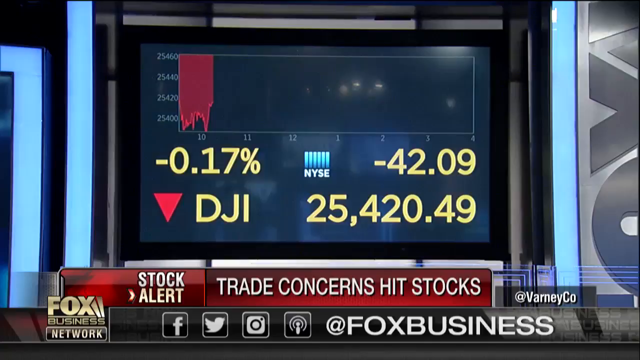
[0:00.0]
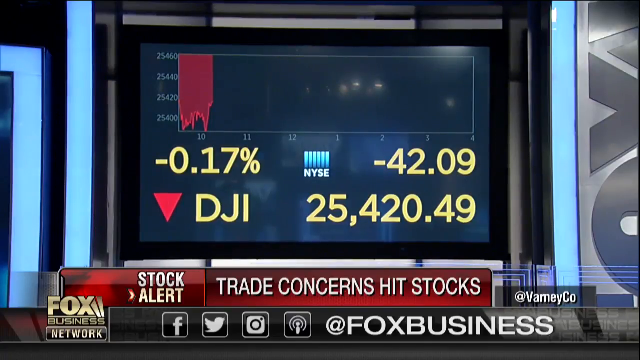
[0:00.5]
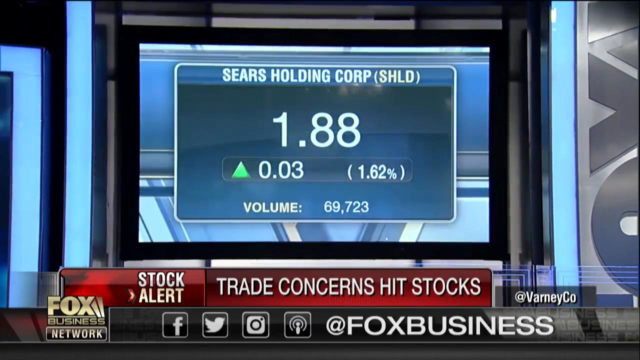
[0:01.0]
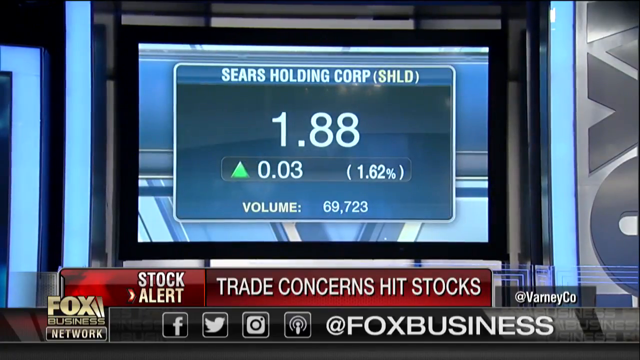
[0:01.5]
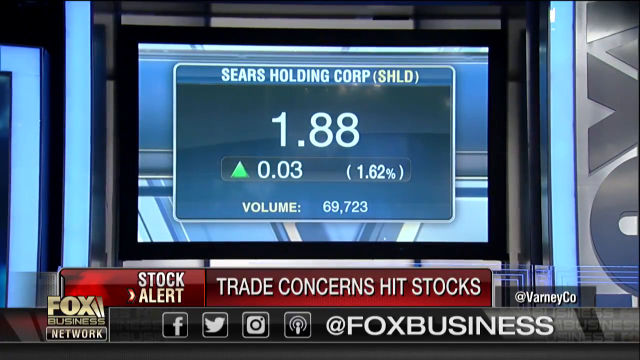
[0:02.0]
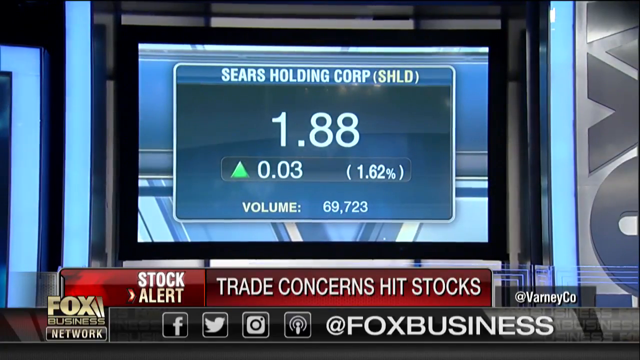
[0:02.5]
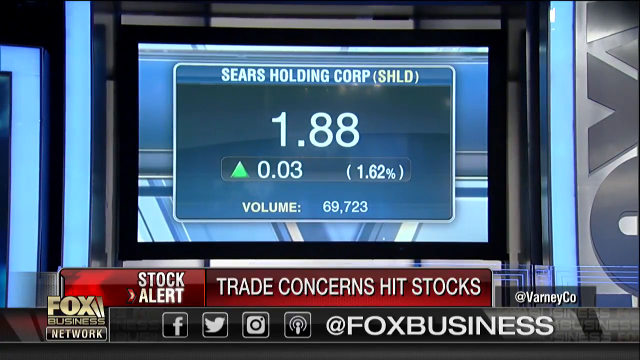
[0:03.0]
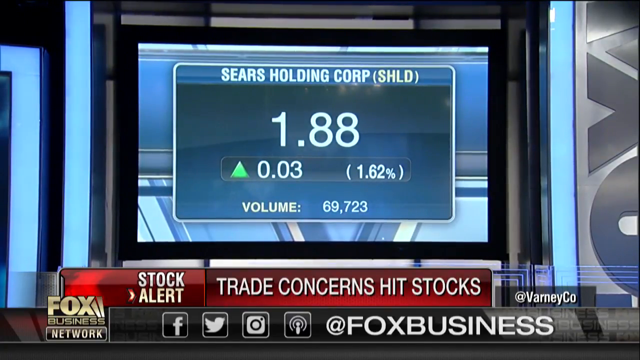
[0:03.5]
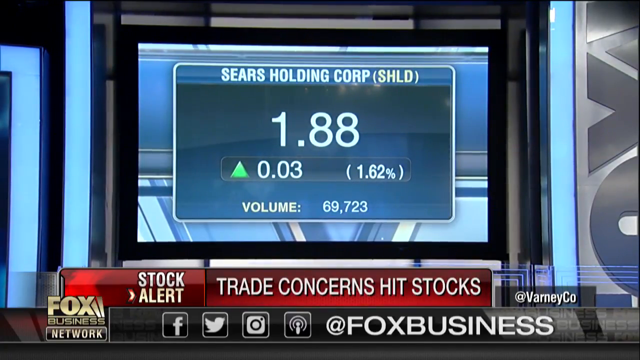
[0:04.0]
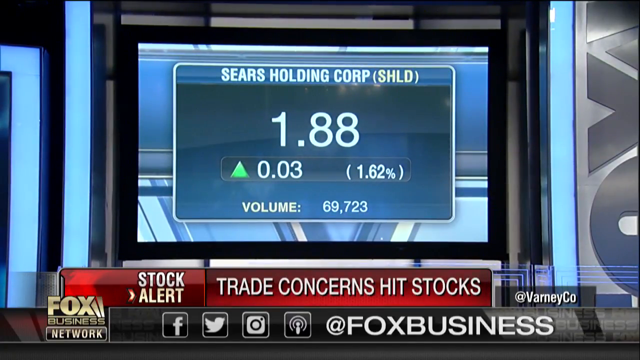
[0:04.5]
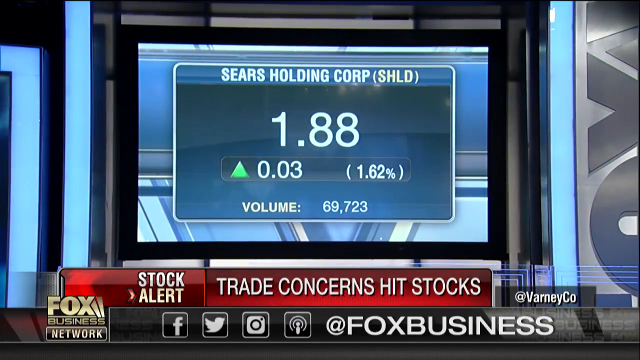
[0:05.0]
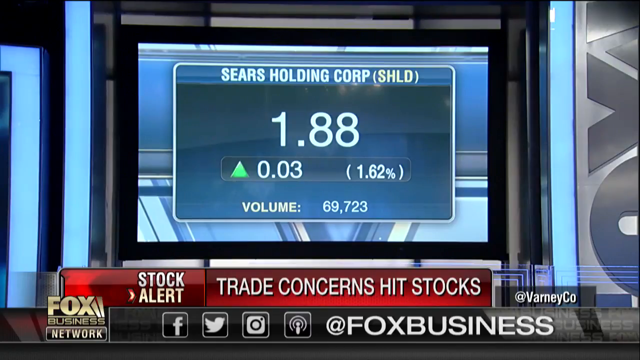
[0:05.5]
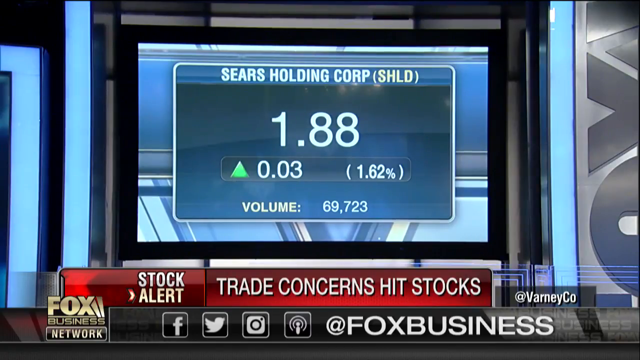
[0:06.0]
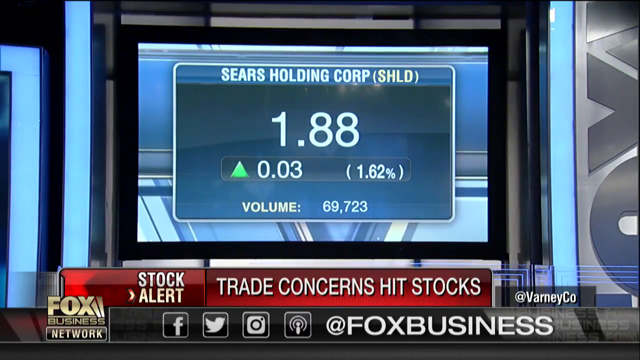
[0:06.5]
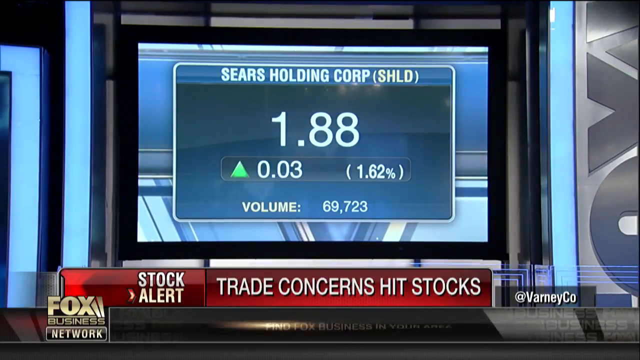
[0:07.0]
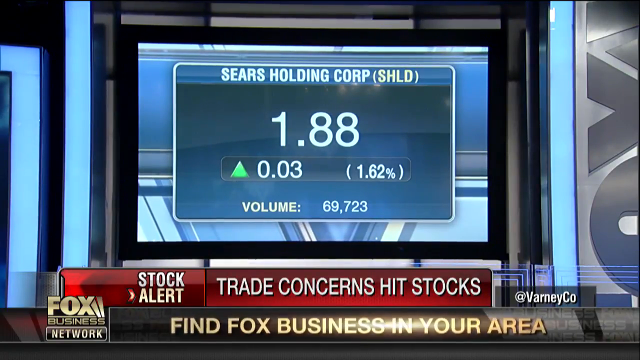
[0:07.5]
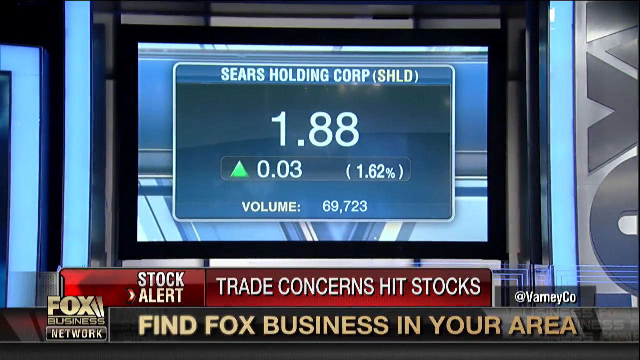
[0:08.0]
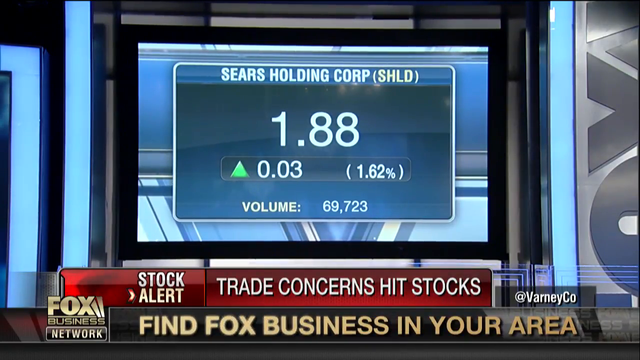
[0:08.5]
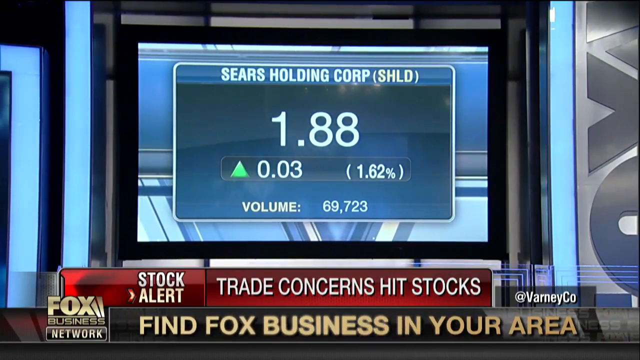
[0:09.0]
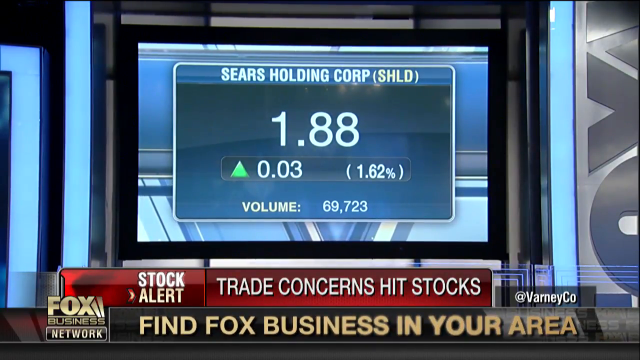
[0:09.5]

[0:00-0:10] A screen shows several numbers. Along the bottom center, text reads "stock alert, trade concerns, hit stocks", and the Fox Business Network logo appears in the lower left-hand corner. The same numbers continue to be shown on the TV screen. The video is rectangular, of good quality, and has smooth transitions. Its colors are gold, red, blue, black and white. Logos of several social media websites appear, including Facebook, Twitter, Instagram and Indeed, along with "at Fox Business".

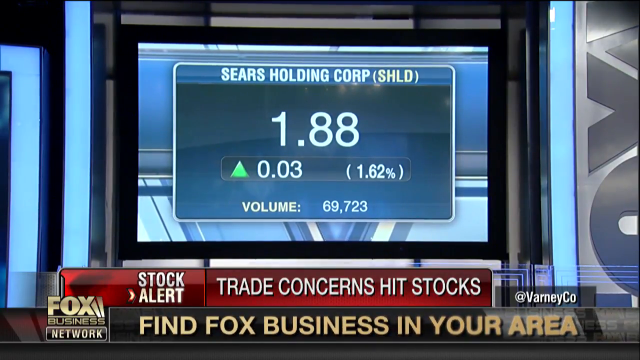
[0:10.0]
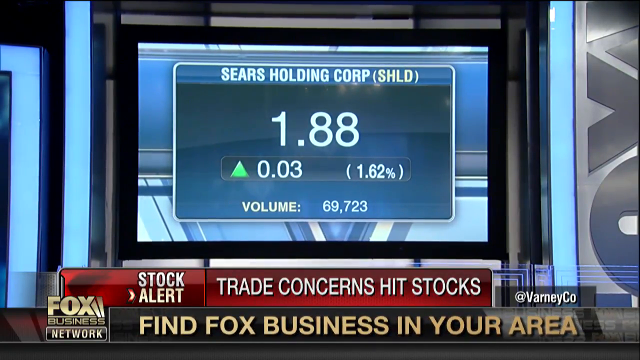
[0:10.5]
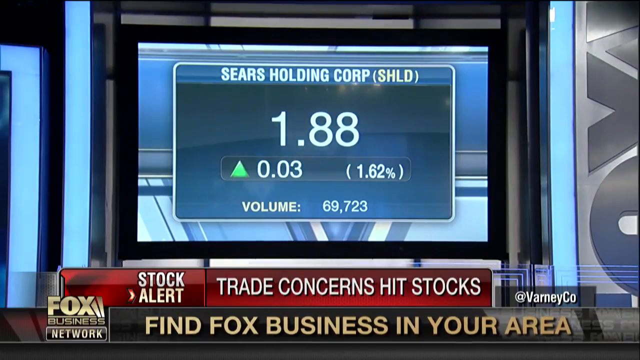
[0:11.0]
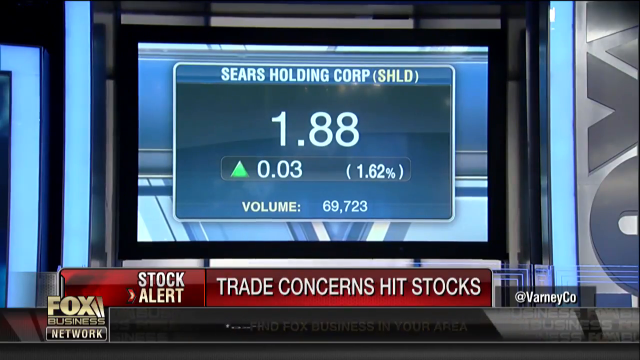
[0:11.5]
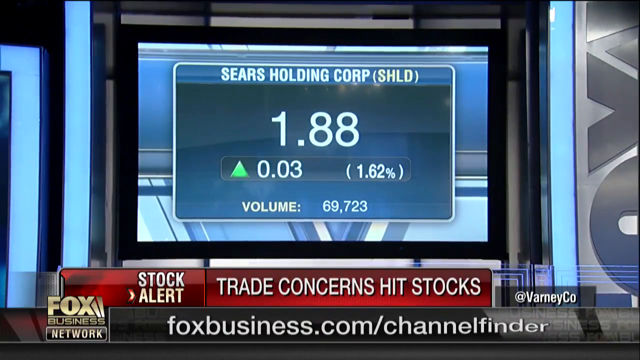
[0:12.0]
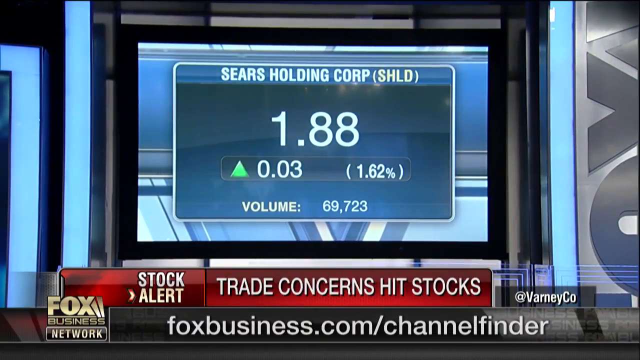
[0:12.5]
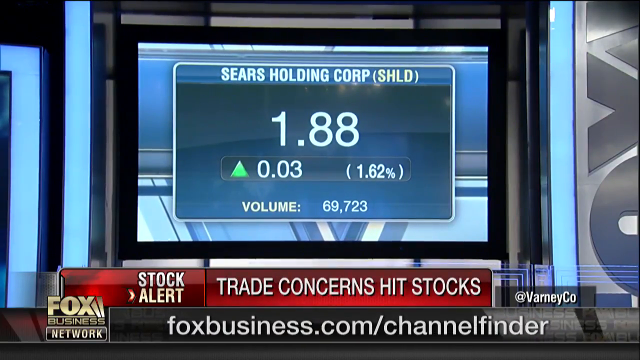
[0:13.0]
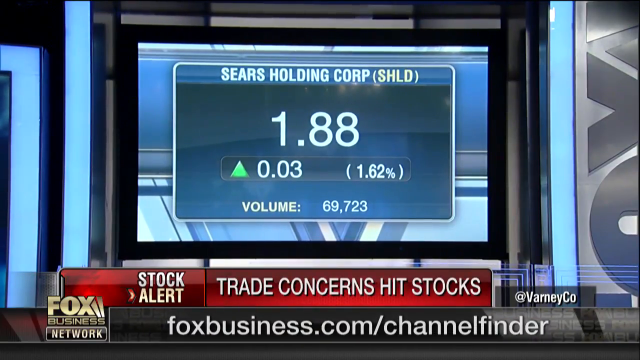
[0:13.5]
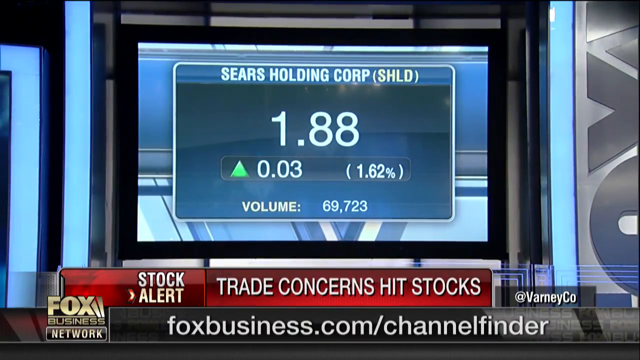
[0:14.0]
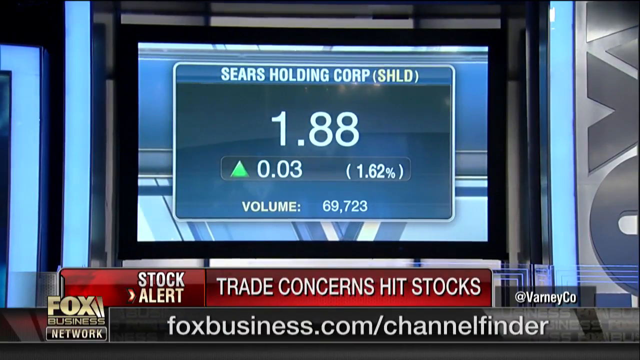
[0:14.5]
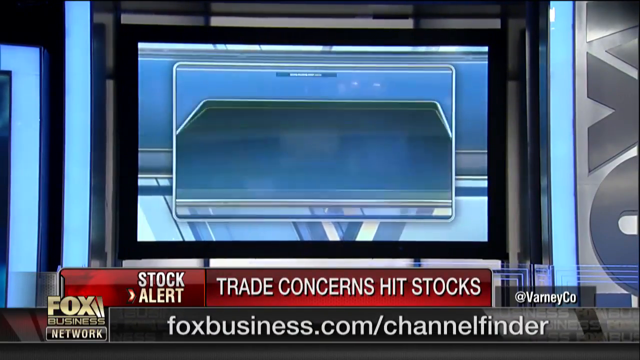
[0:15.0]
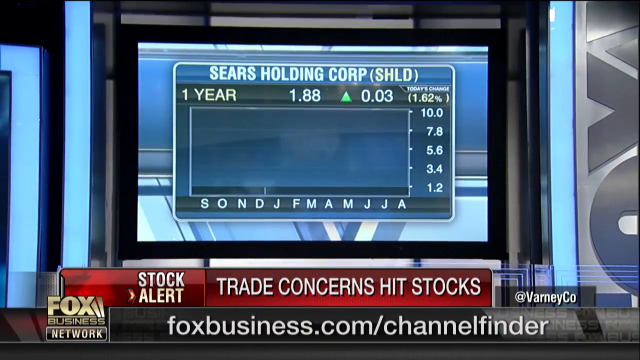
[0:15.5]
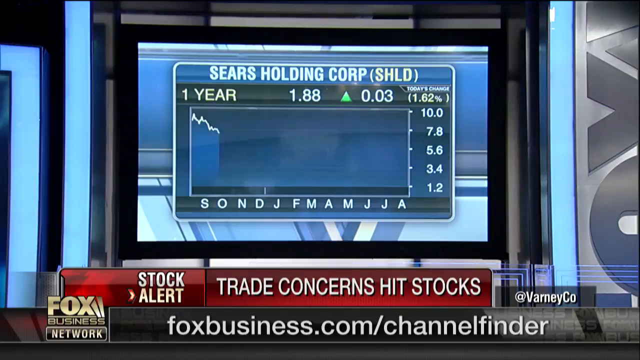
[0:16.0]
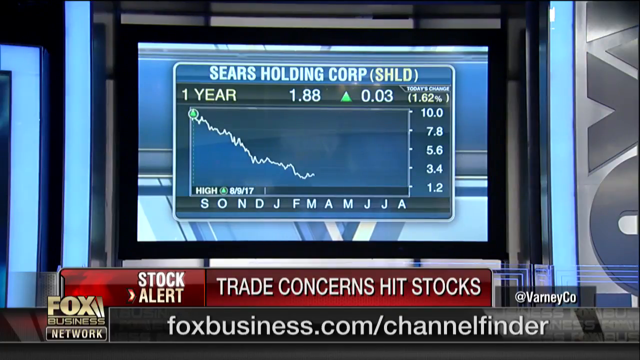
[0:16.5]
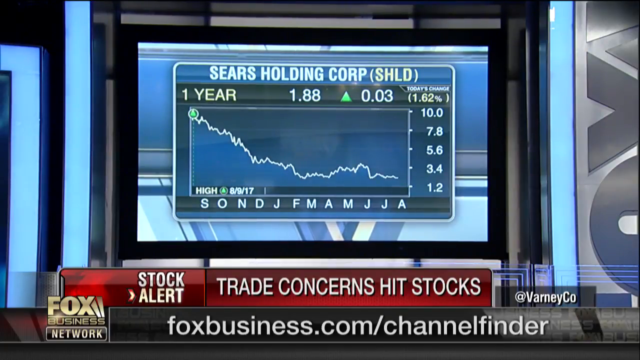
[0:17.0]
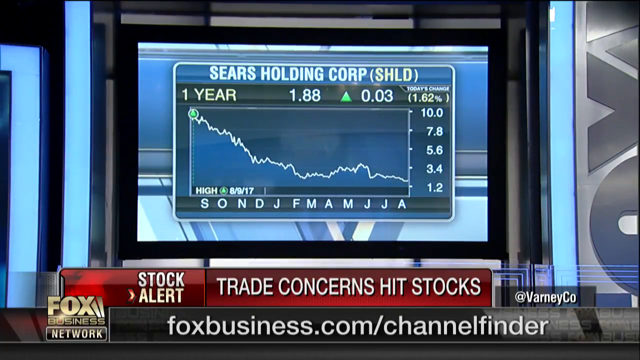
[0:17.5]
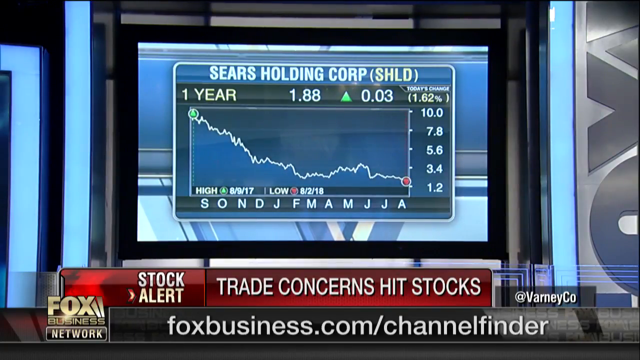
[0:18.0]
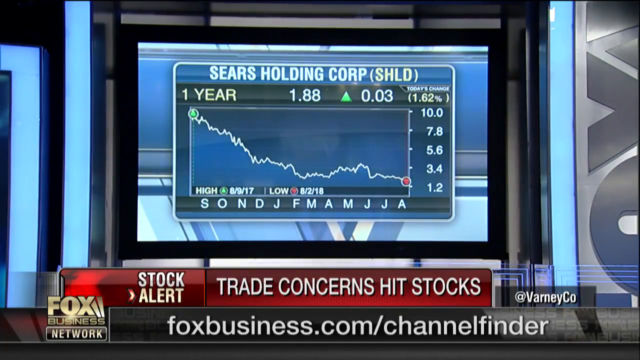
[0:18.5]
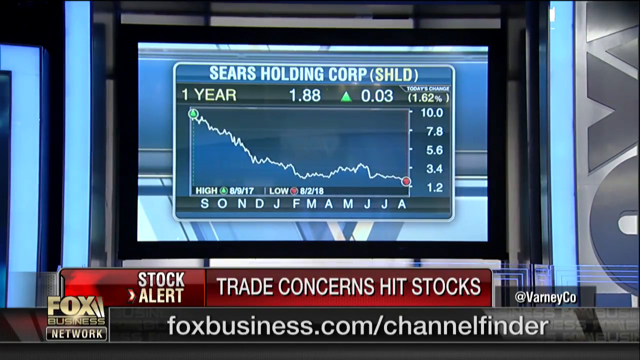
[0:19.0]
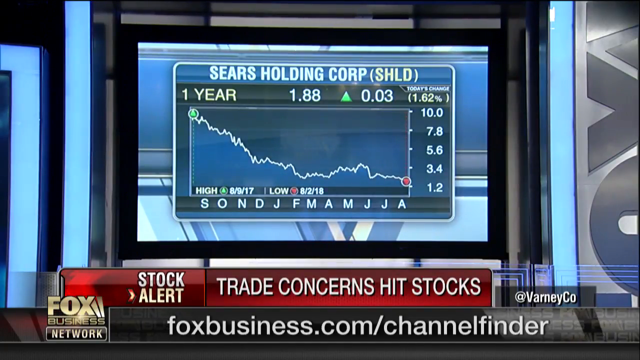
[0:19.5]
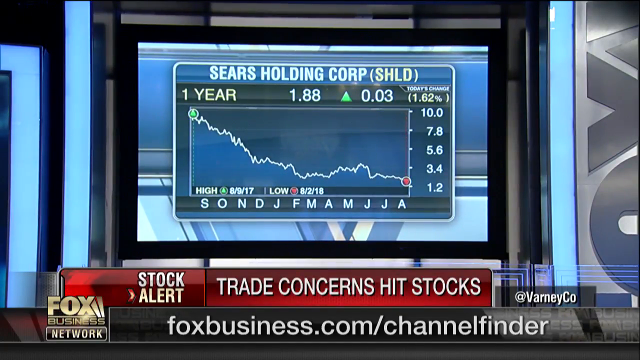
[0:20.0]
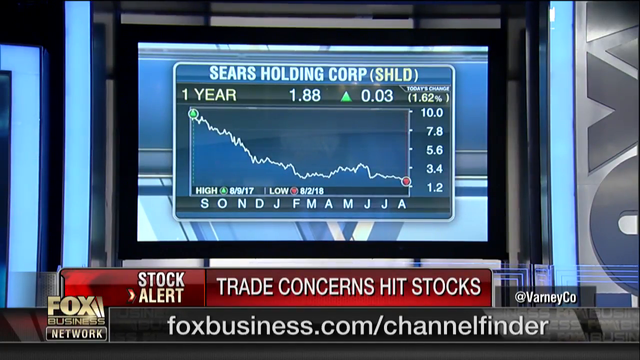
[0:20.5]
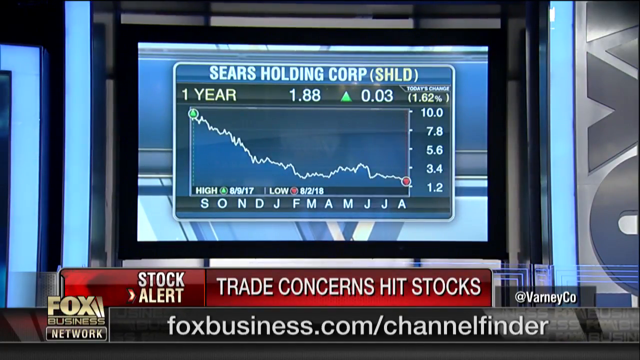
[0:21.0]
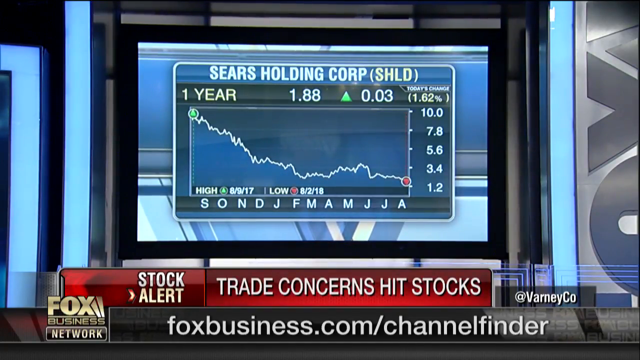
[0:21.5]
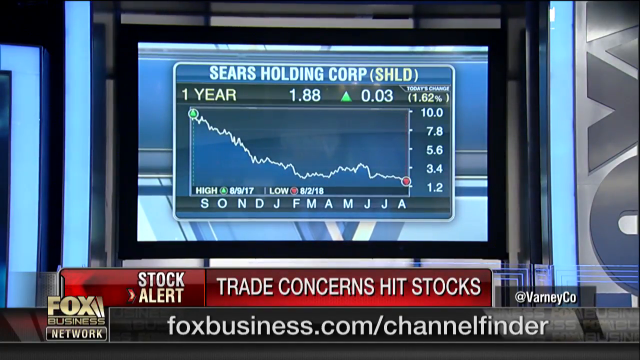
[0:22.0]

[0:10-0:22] More words continue to appear along the bottom center of the screen, reading "stock alert trade concerns hit stocks Fox Business Network" and "find Fox business in your area", followed by a web address beginning "Fox business.com/channel". The TV screen then shows a graph titled "Sears holding Corp SHLD" with "1 year" and the numbers "1.88" and "0.03". The video is rectangular, of good quality, with smooth transitions, and not much else is going on. Its colors include red, gold, blue, white and green.